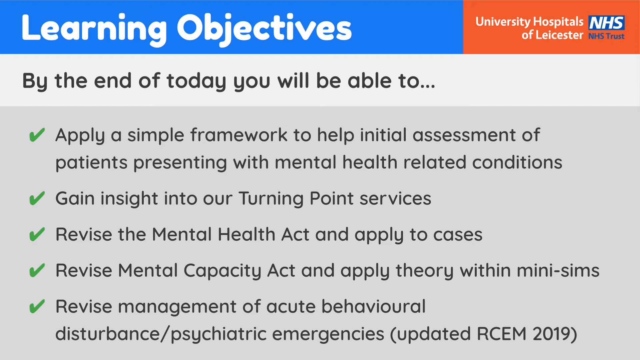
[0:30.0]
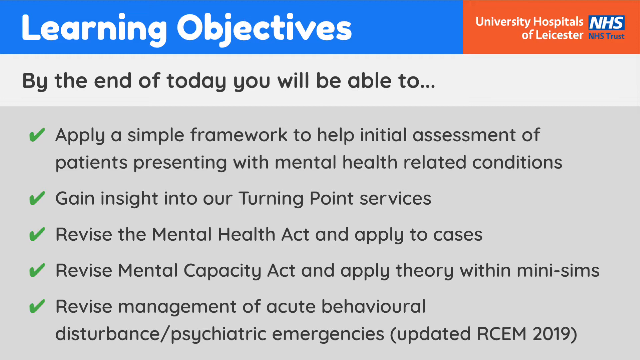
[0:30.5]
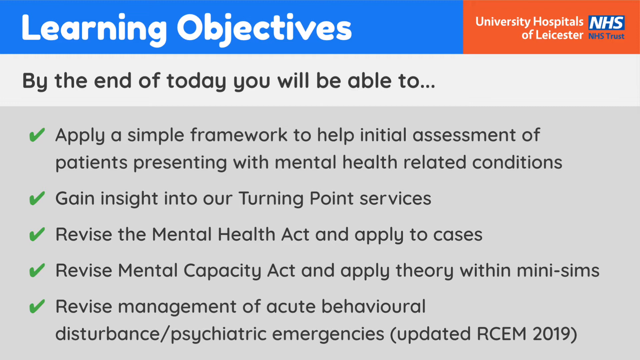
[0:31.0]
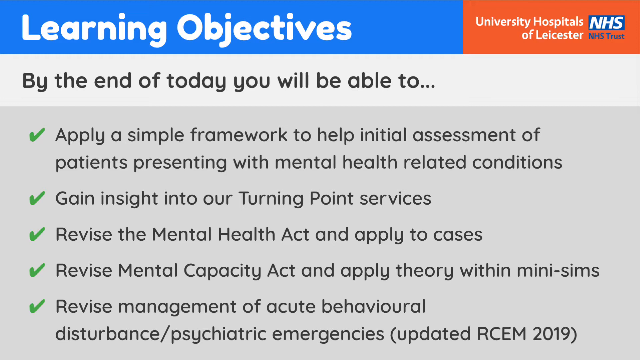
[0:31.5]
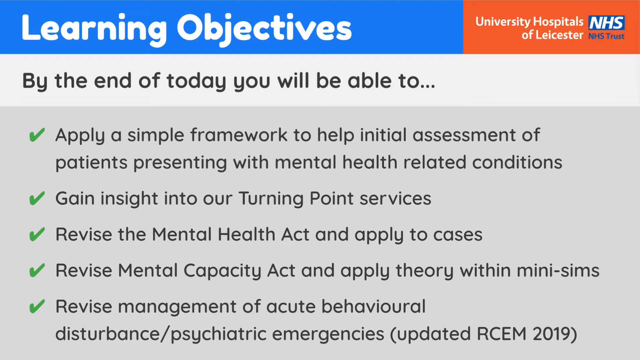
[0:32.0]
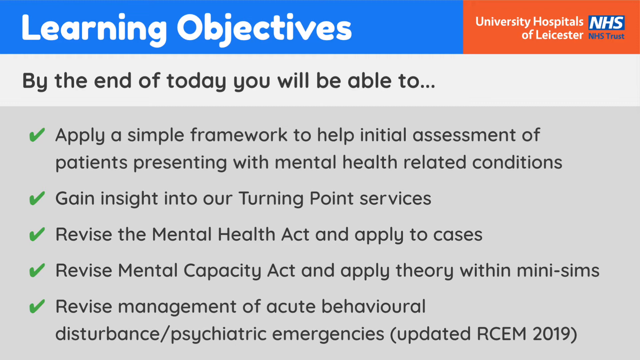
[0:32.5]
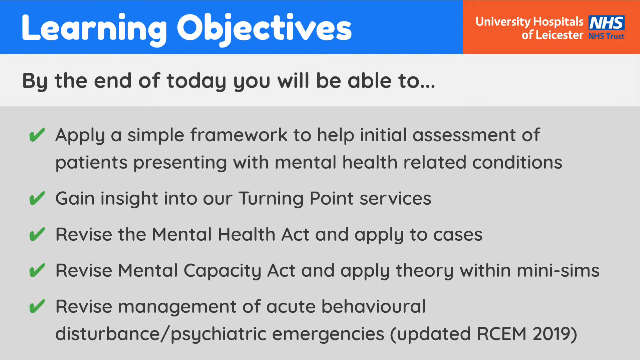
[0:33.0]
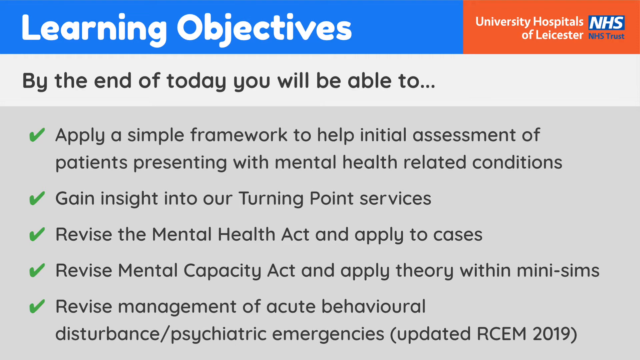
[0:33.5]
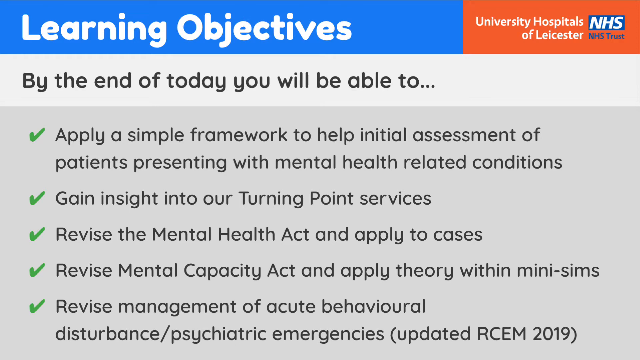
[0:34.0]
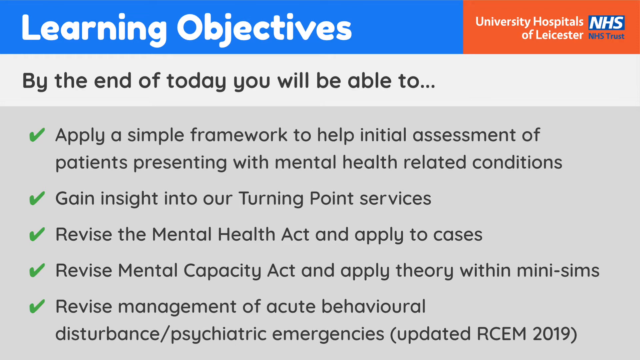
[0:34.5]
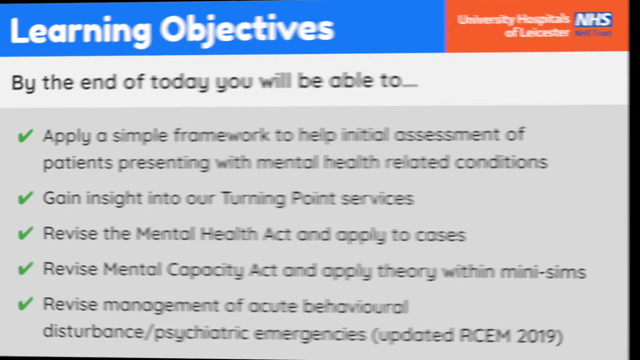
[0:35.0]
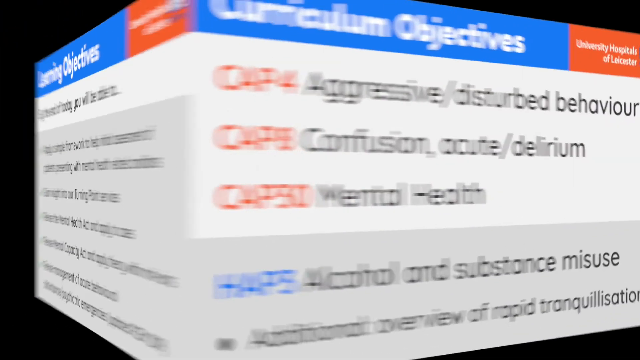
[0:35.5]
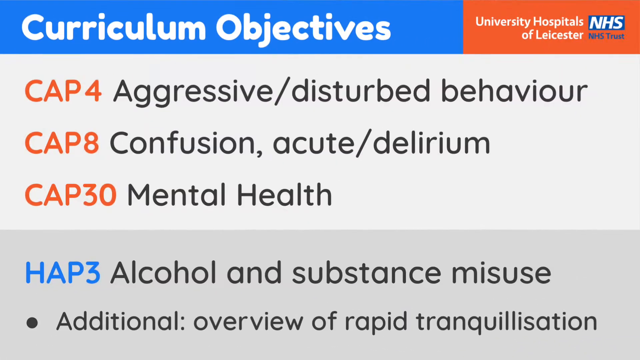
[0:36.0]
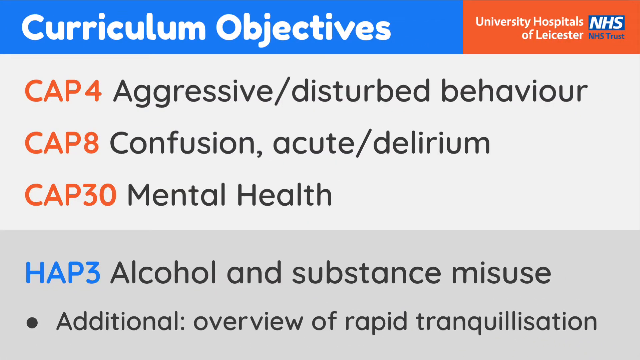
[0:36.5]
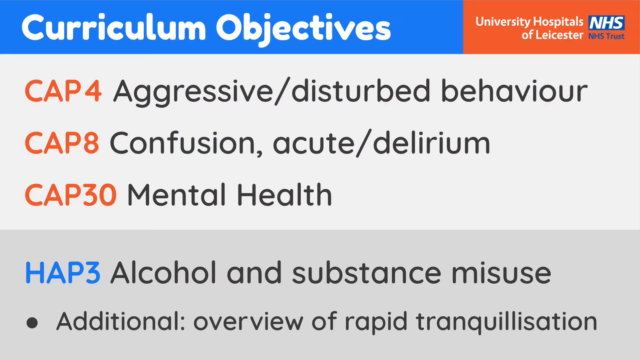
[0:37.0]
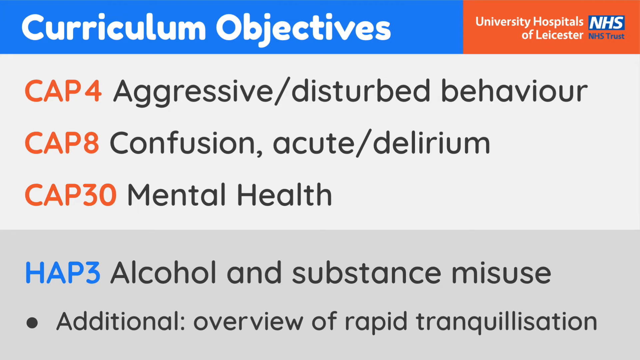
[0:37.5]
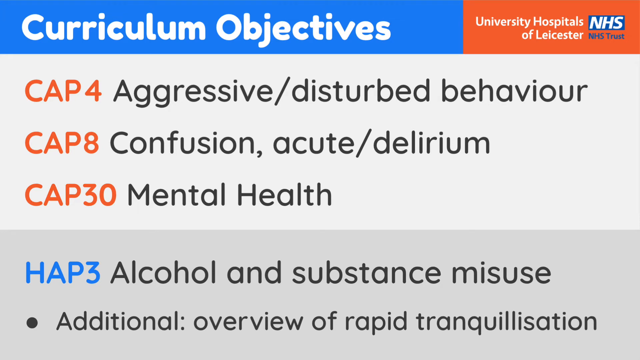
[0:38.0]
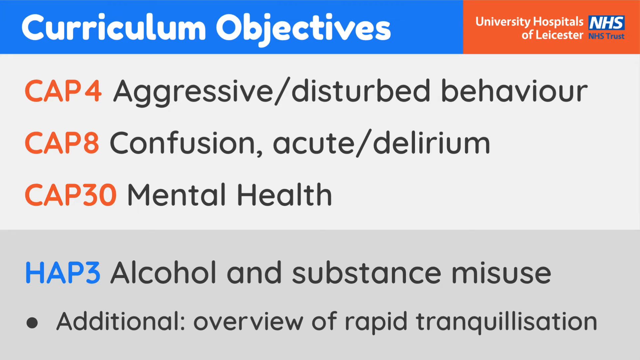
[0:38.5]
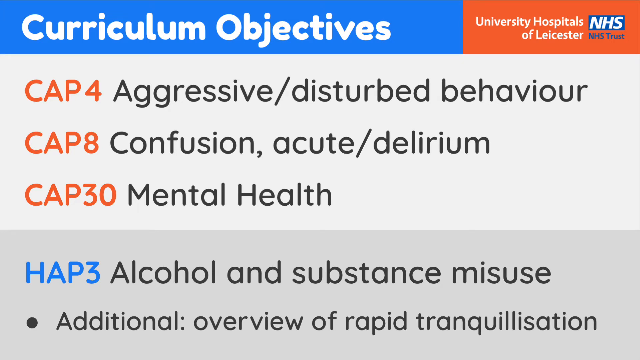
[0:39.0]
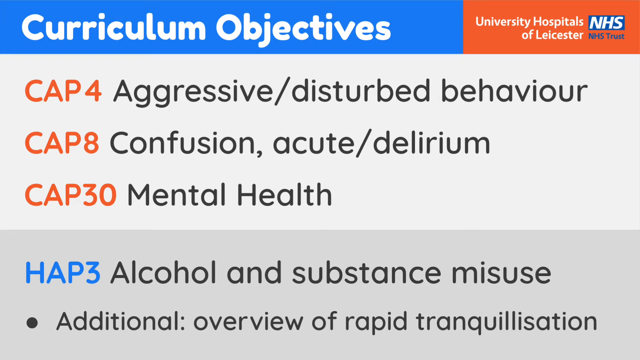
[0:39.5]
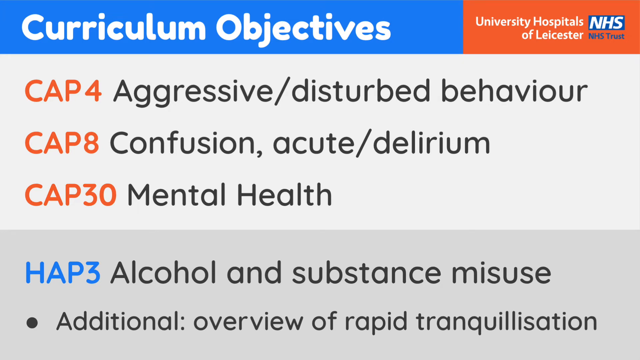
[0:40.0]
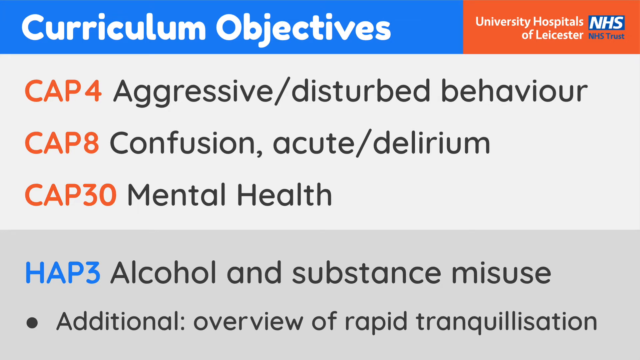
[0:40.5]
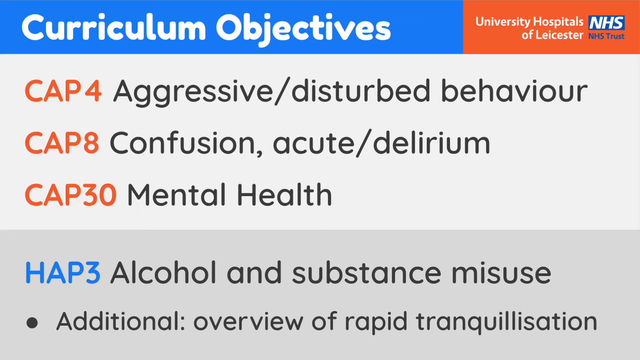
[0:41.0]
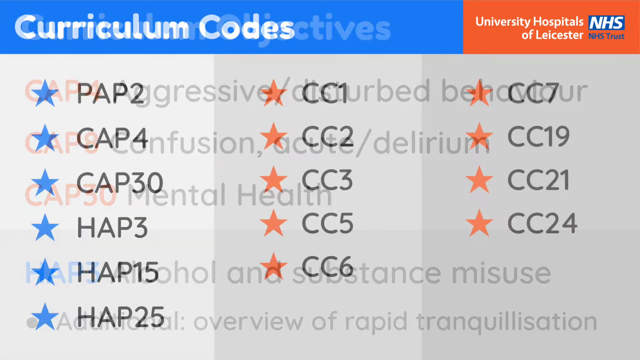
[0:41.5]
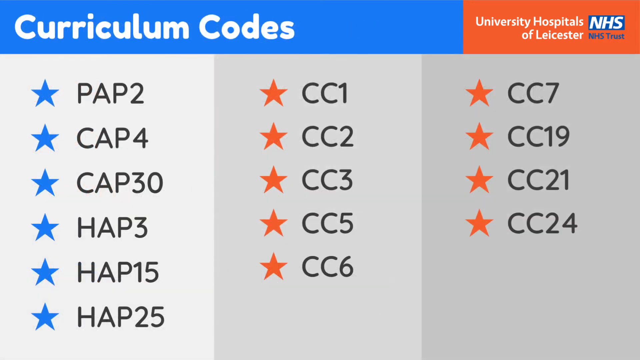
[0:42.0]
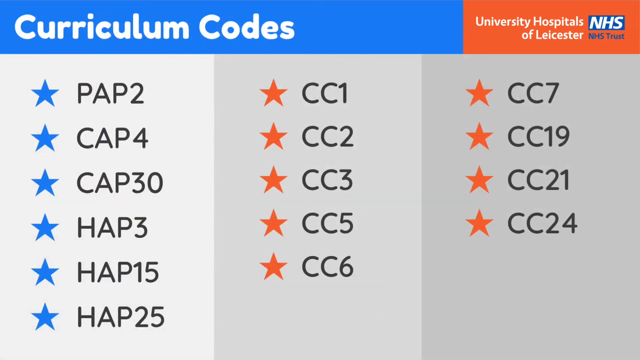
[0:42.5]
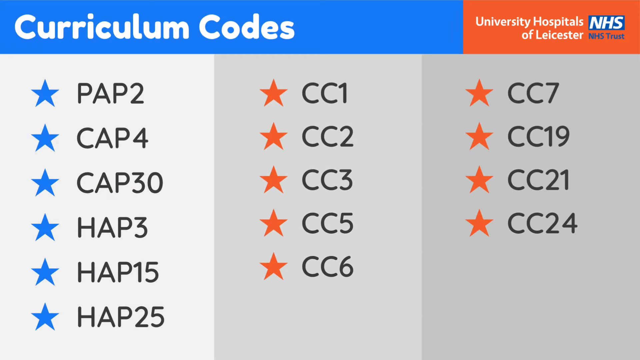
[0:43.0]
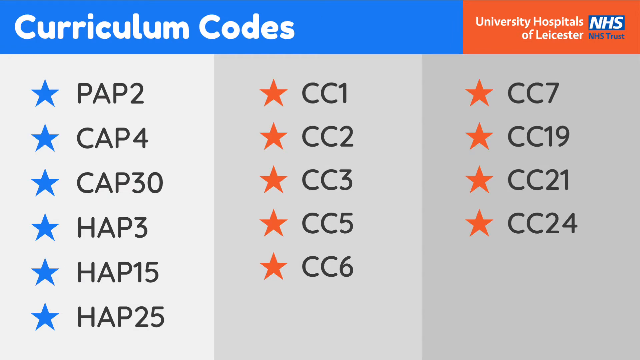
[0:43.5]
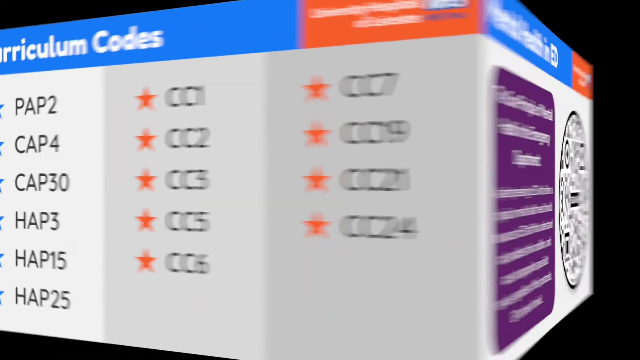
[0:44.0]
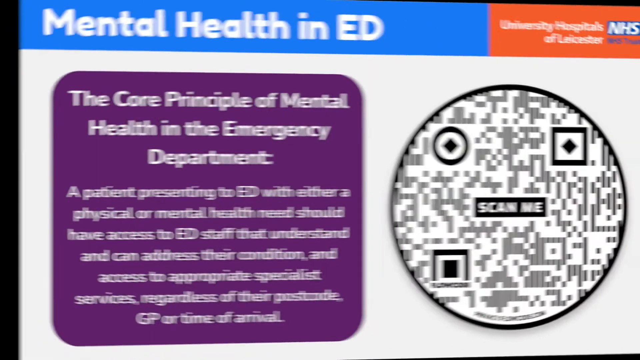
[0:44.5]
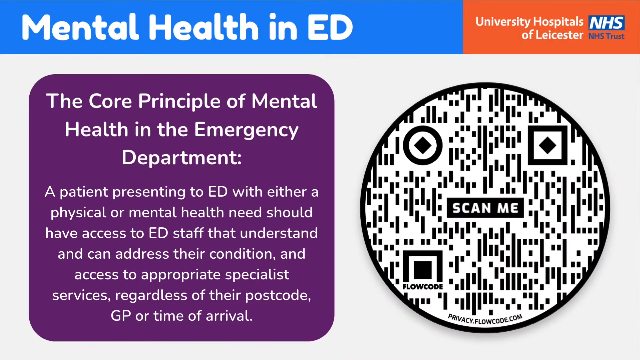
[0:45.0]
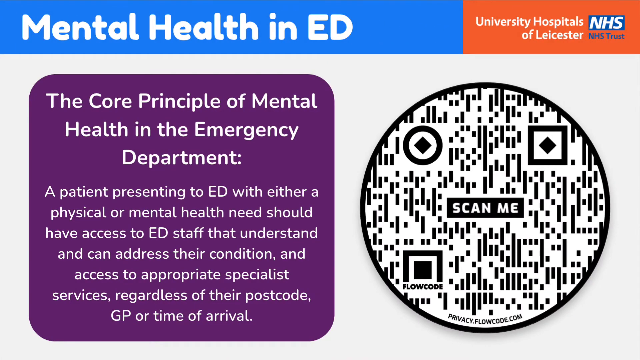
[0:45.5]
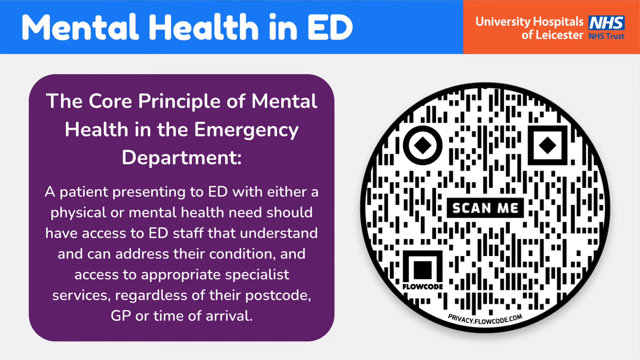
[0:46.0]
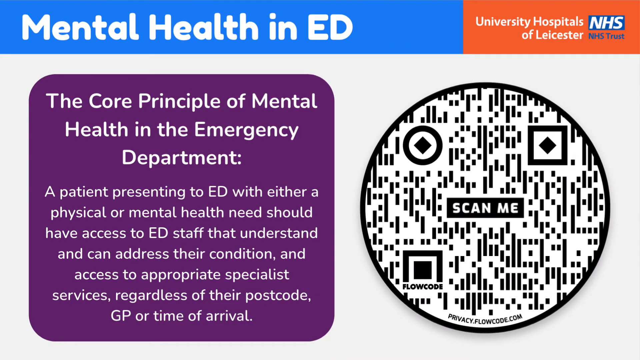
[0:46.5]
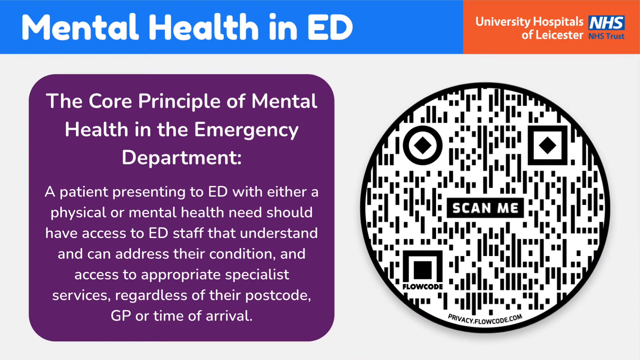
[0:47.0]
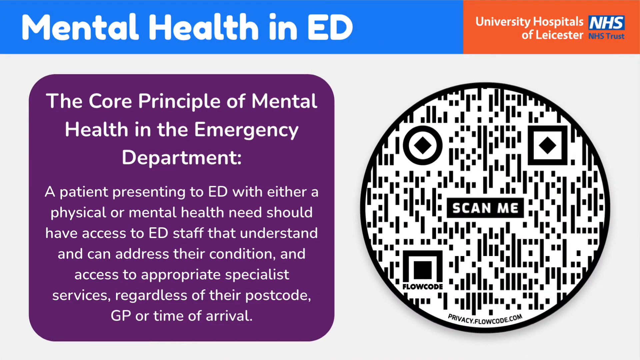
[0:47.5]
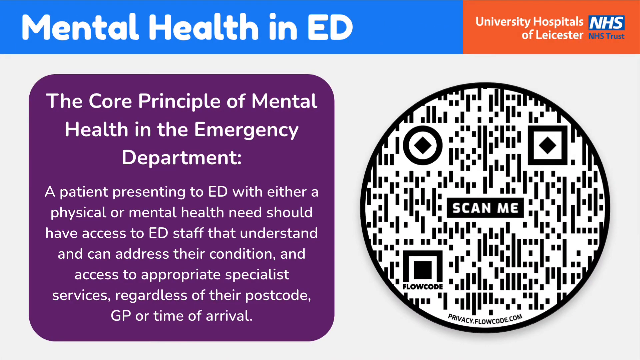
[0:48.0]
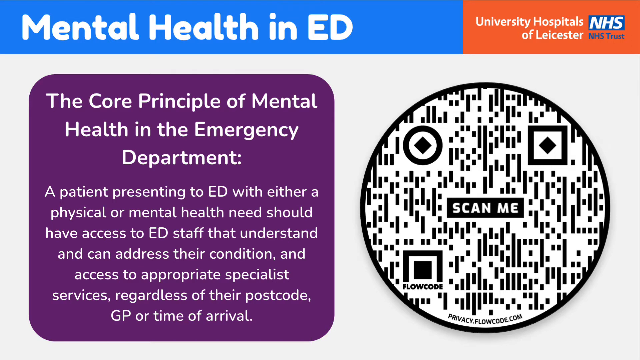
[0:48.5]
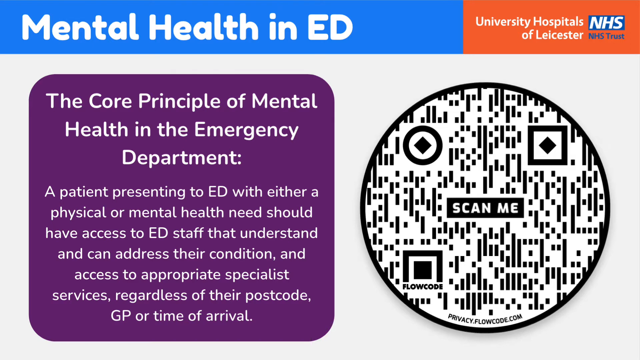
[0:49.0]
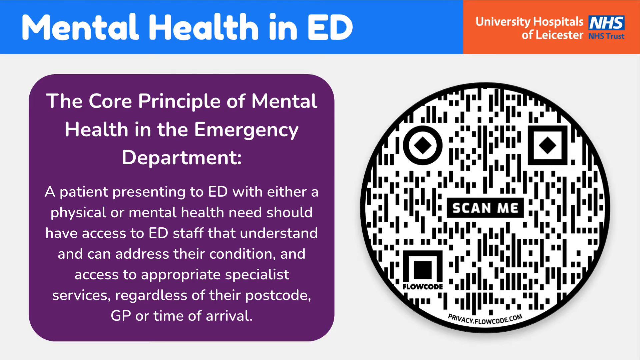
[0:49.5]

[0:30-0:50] A learning objectives page from the University Hospitals of Lancaster, with the abbreviation NHS, lists the goals participants should be able to achieve after the course. The next page is curriculum objectives, reading "CAP 4, Aggressive Disturbed Behavior", "CAP 8, Confusion, Acute Delirium", "CAP 30, Mental Health" and "HAP 3, Alcohol and Substance Misuse", with a listing of the curriculum codes. There is a write-up of the core principle of mental health in the emergency department, and a little information written in a purple circle about the mental health of a patient who comes into the emergency room and how staff need to deal with that. The video continues through the goals and then the objectives, which are written in orange, black and blue to distinguish them from one another.